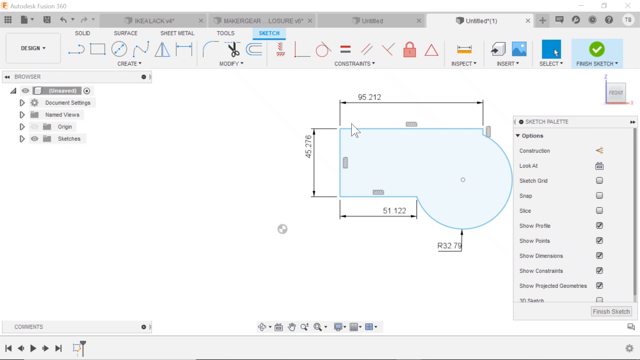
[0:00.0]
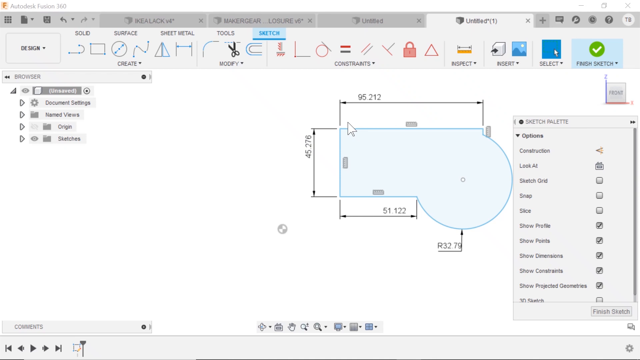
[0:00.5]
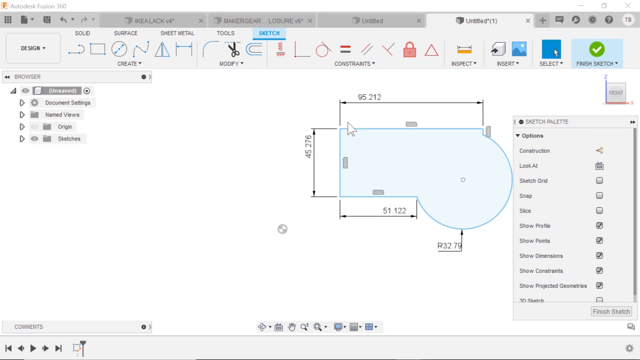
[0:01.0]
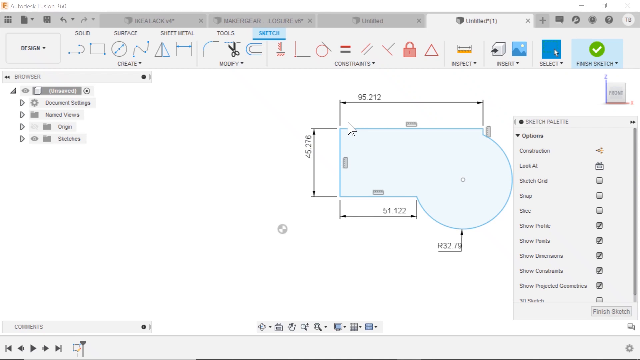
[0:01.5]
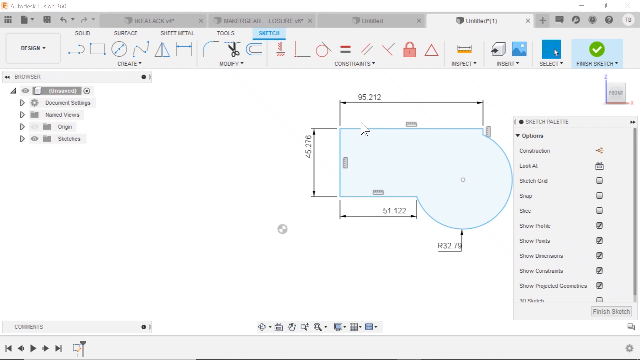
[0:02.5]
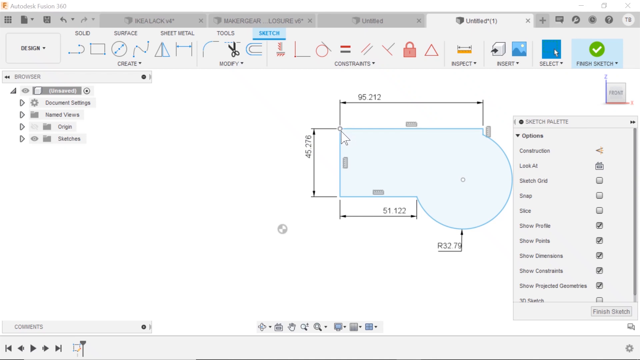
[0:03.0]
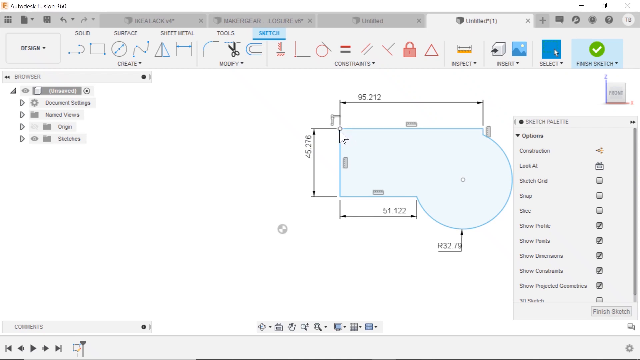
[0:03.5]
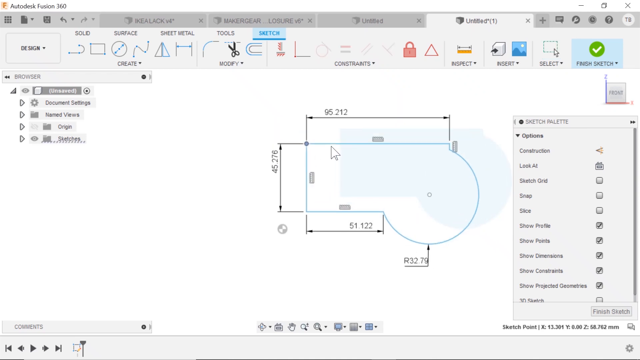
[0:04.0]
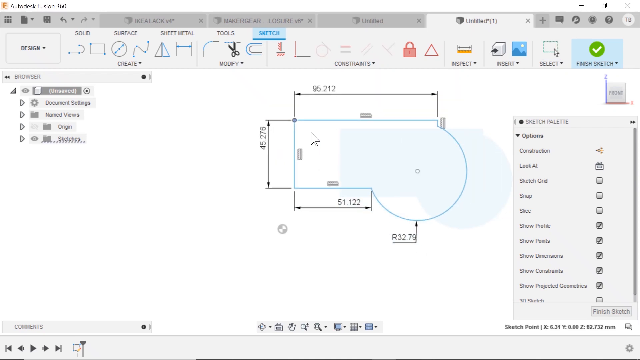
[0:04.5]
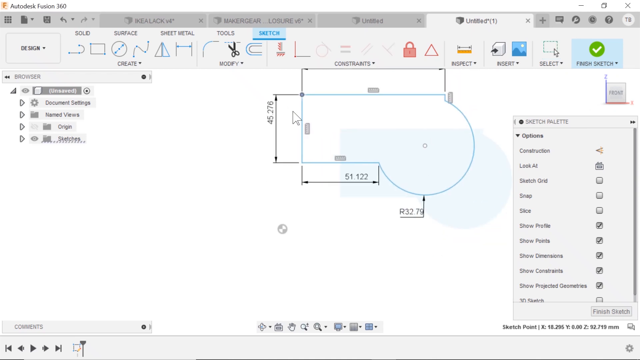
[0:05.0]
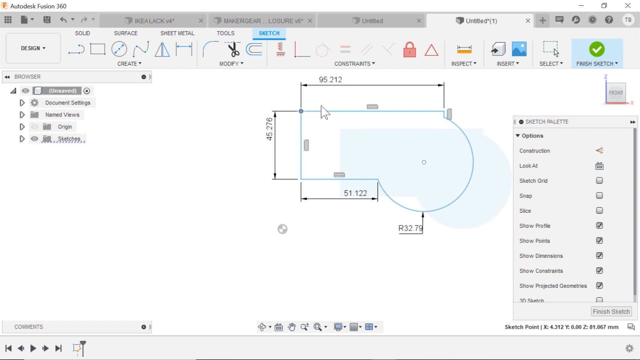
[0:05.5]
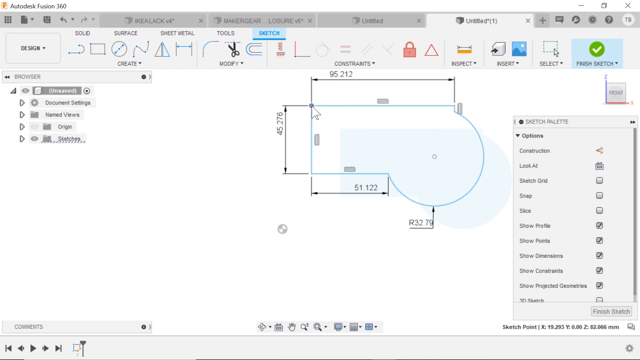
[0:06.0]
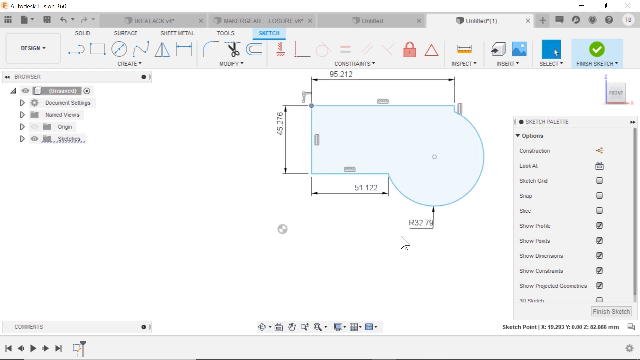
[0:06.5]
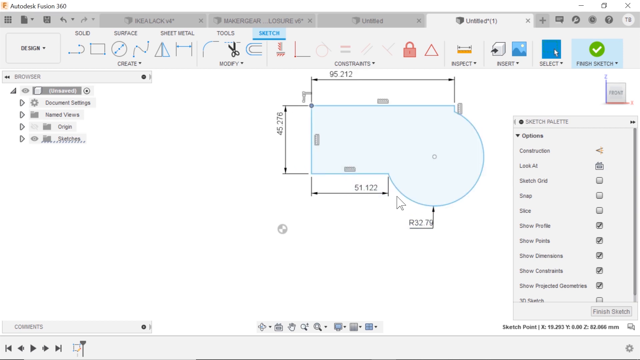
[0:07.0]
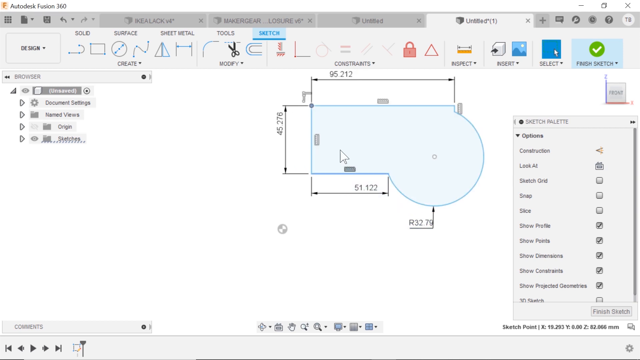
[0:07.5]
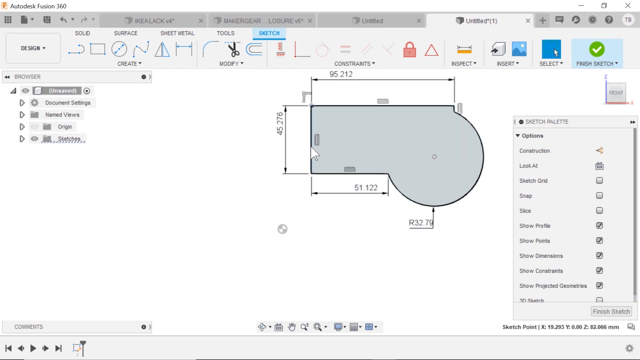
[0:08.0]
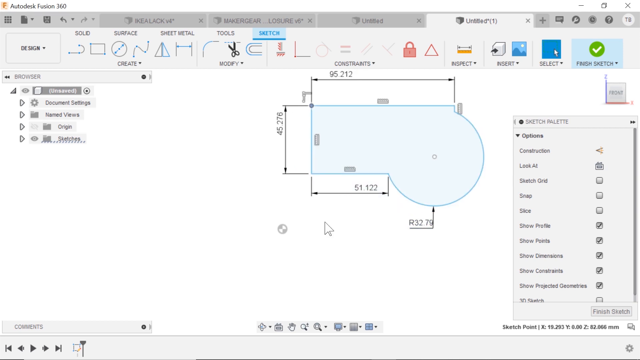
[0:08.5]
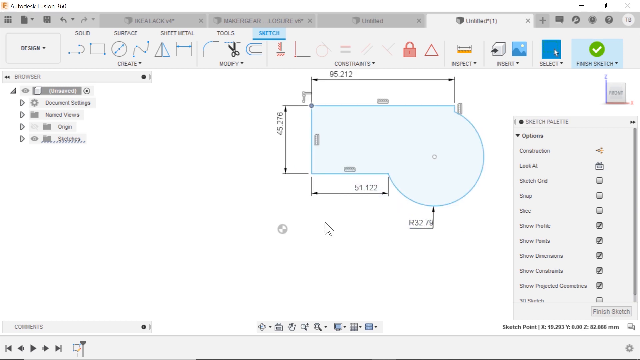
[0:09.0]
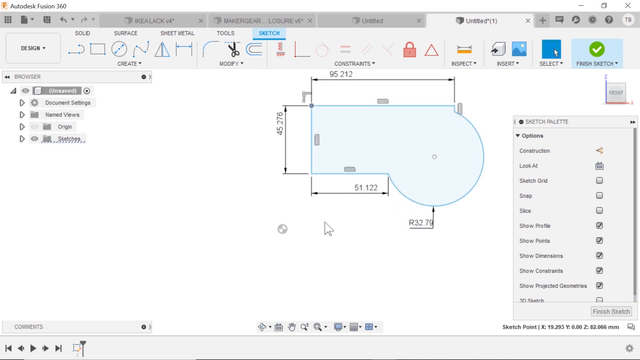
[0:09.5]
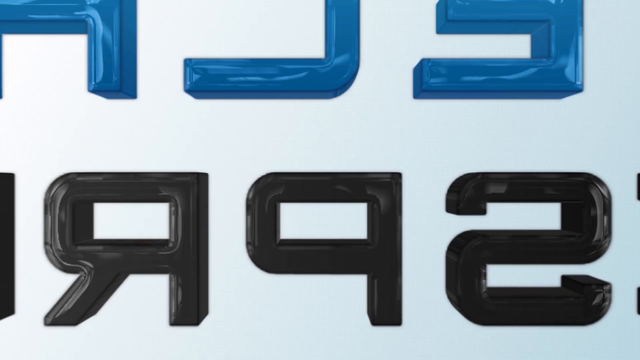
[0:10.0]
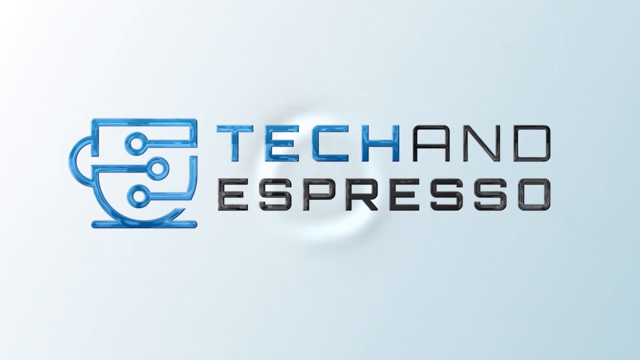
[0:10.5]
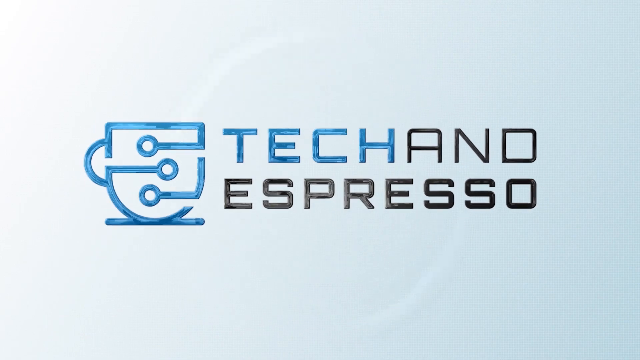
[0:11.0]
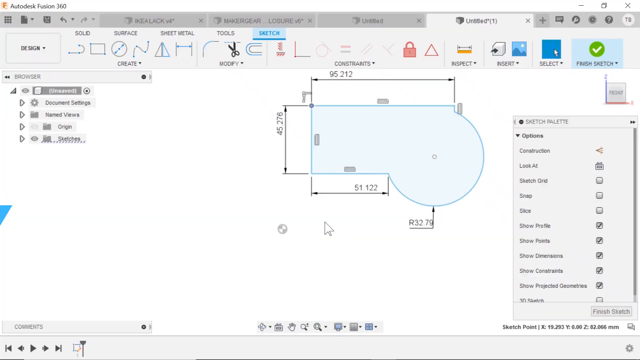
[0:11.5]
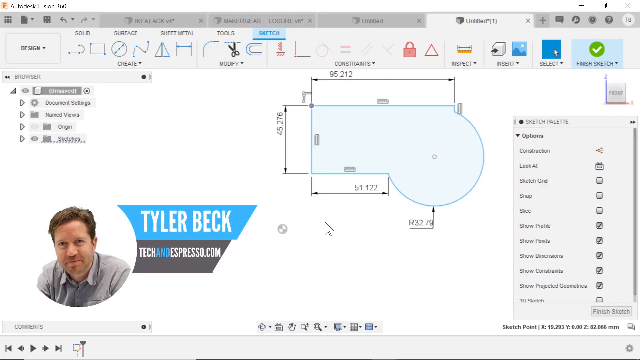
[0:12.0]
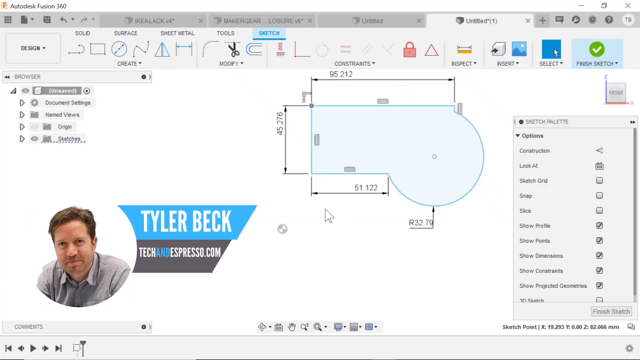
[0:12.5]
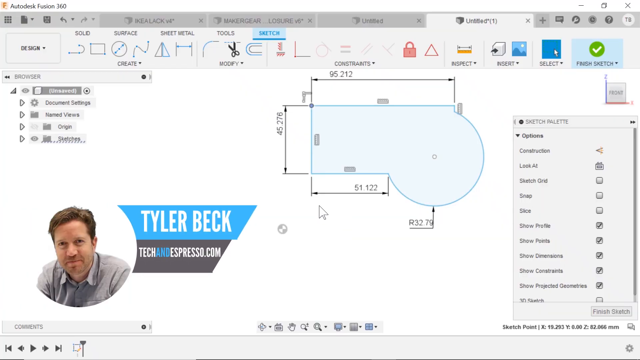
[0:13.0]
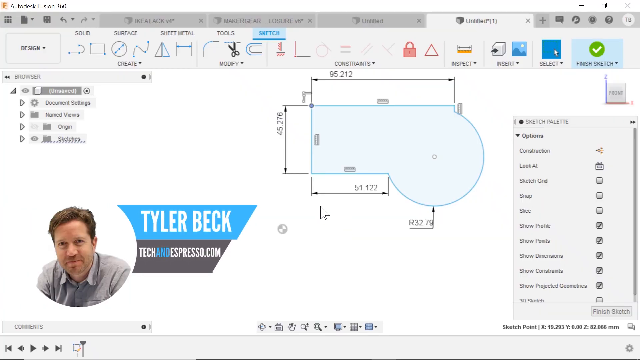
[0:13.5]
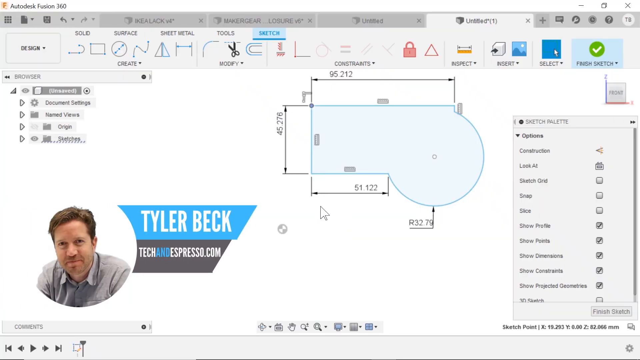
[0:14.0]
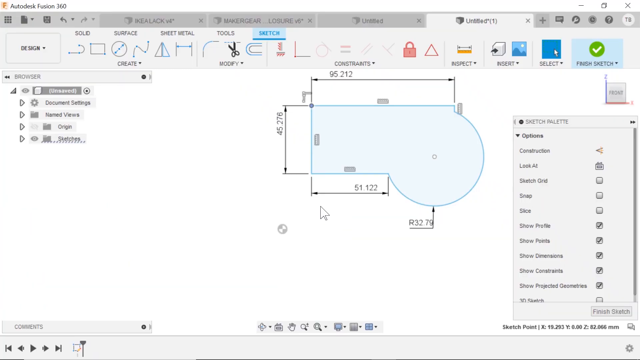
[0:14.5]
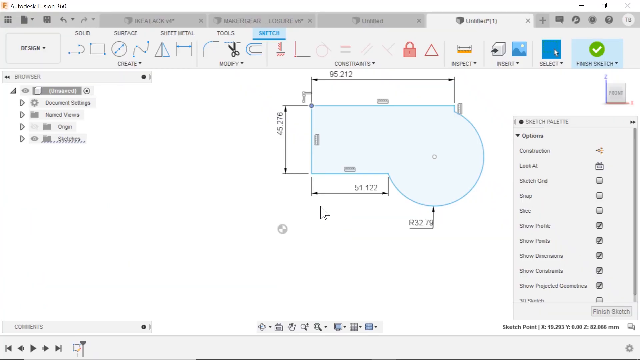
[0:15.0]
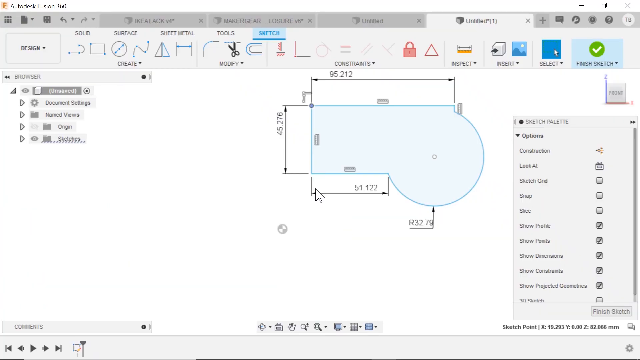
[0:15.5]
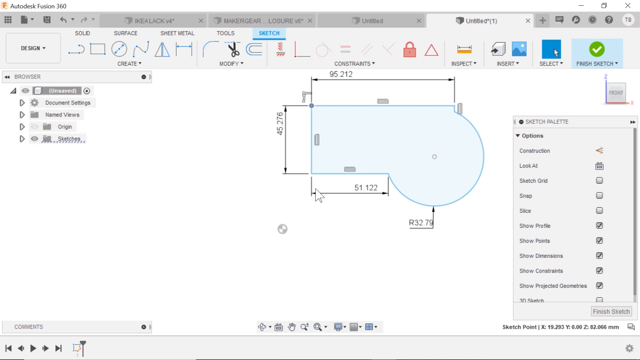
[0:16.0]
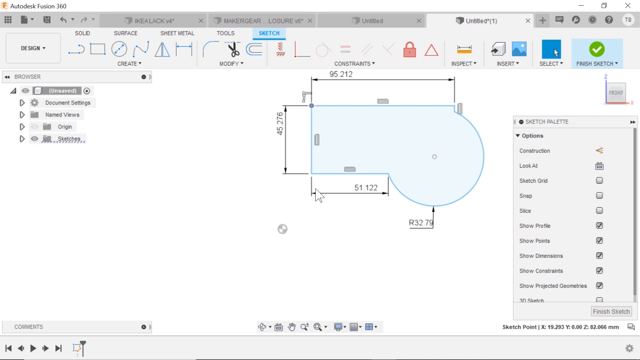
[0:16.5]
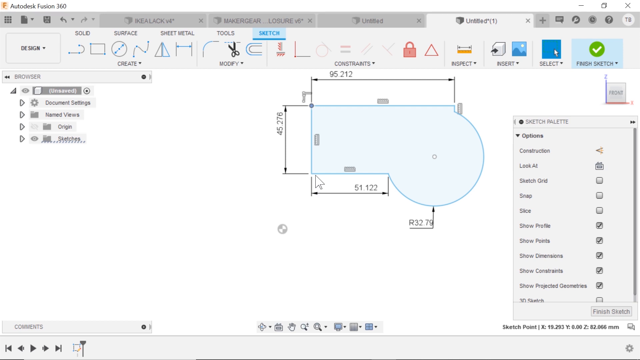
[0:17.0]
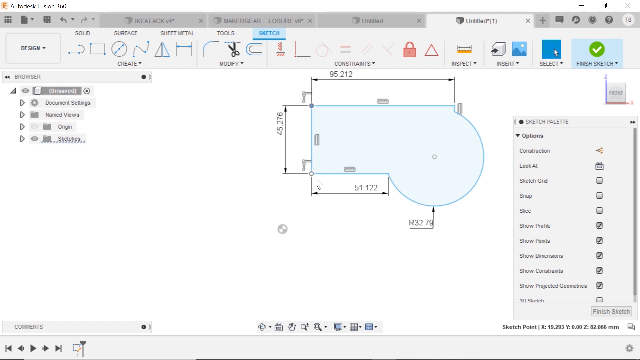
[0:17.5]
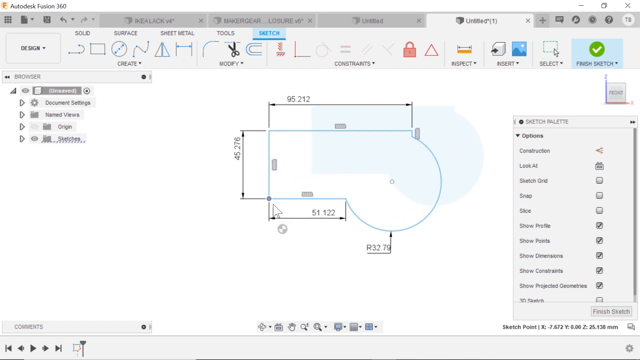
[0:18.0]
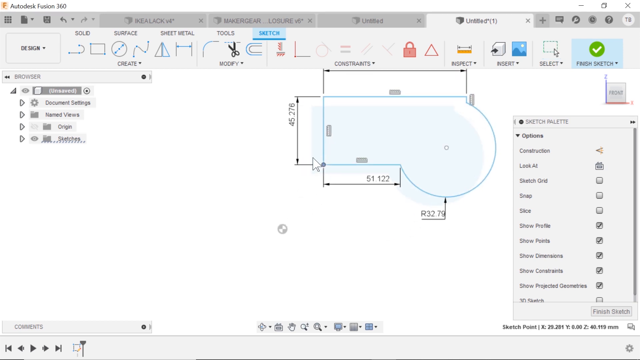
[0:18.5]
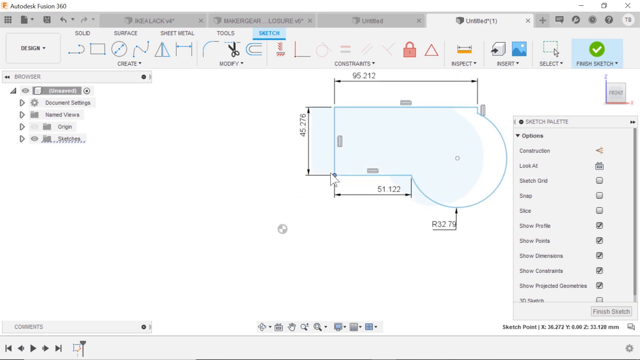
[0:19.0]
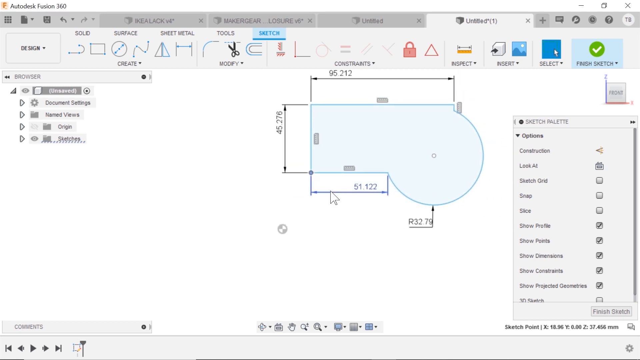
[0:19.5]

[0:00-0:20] The video opens on a computer screen showing what appears to be a program called Autodesk Fusion, judging by the text in the upper left corner of the application. In the middle of the screen is a diagram that looks like a rectangle attached to a circle. The mouse clicks the shape and drags it around. On the right is a menu labeled "Sketch Palette" with a number of options. The shape has a light blue fill with a darker blue outline, and when it is clicked it turns gray and black. A logo then appears reading "Tech and Espresso," with an image on its left that looks like a coffee cup. In the bottom left corner is a circular portrait photograph of a person, and next to it is the name "Tyler Beck."